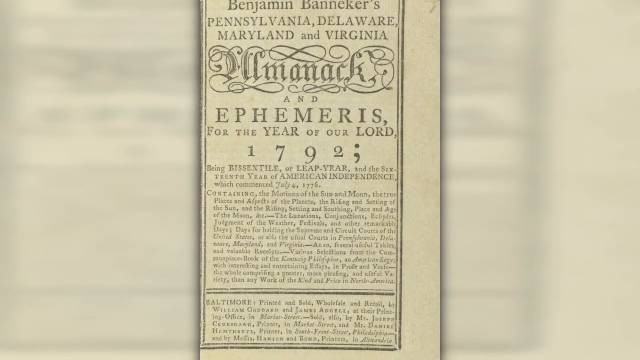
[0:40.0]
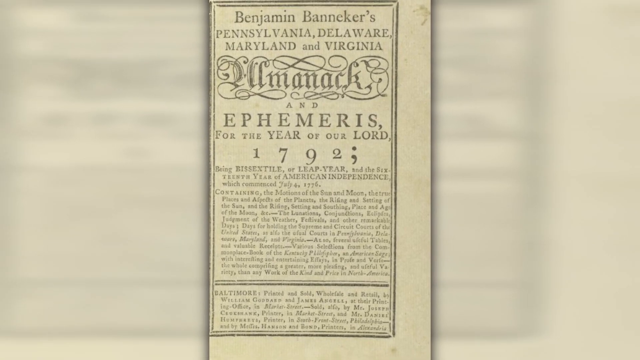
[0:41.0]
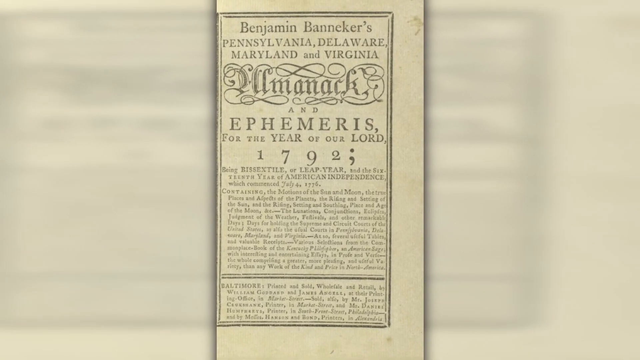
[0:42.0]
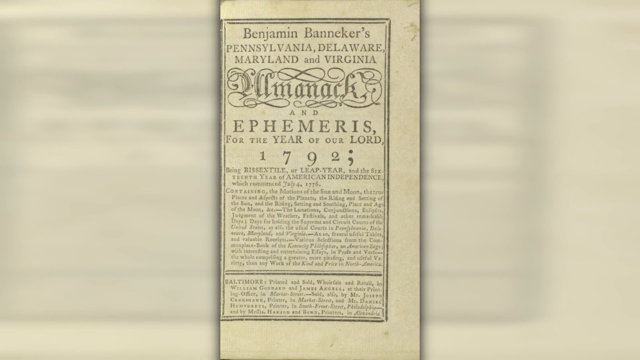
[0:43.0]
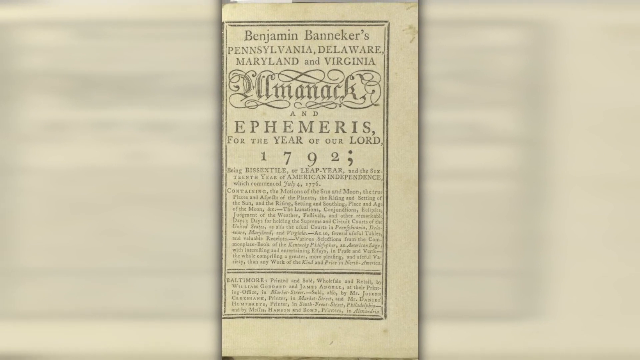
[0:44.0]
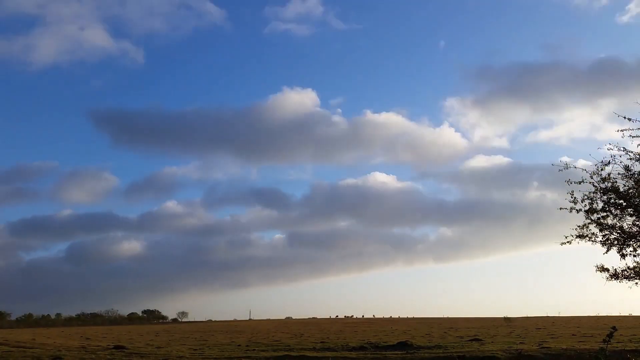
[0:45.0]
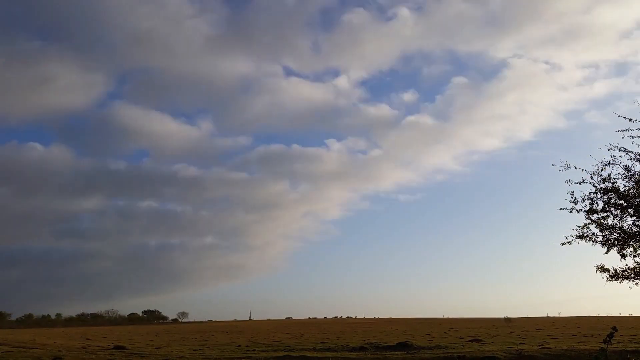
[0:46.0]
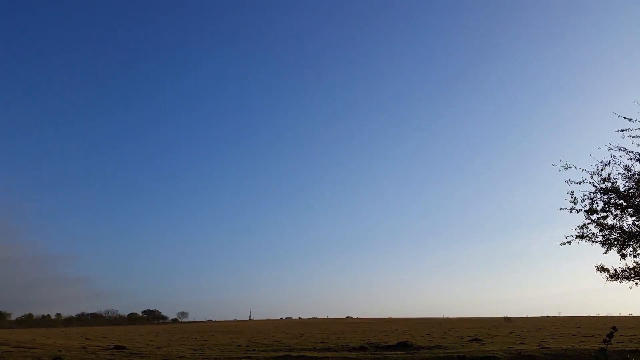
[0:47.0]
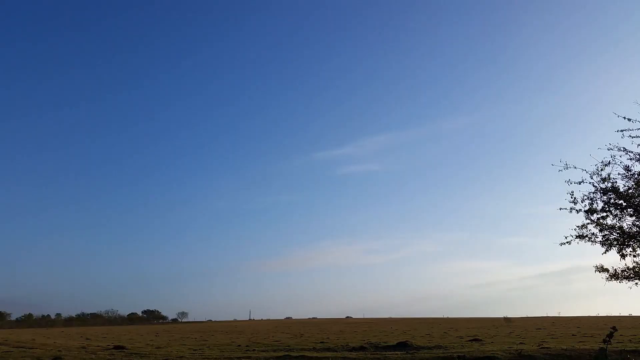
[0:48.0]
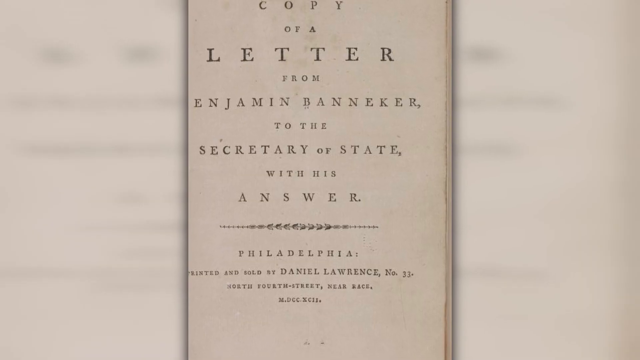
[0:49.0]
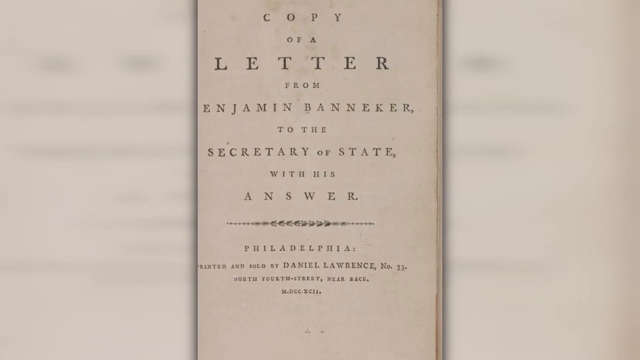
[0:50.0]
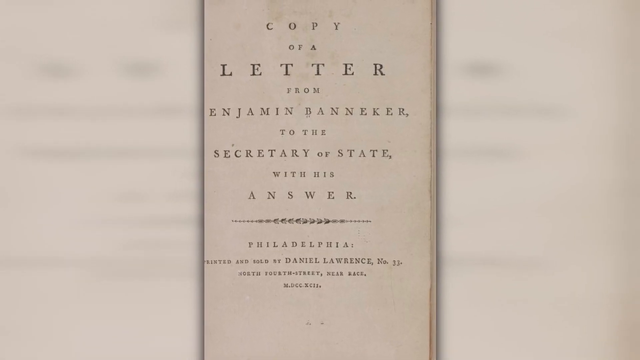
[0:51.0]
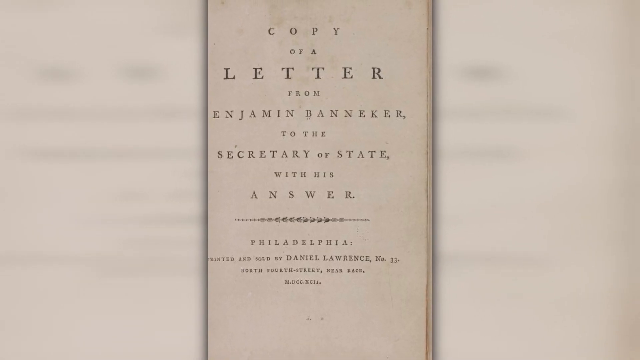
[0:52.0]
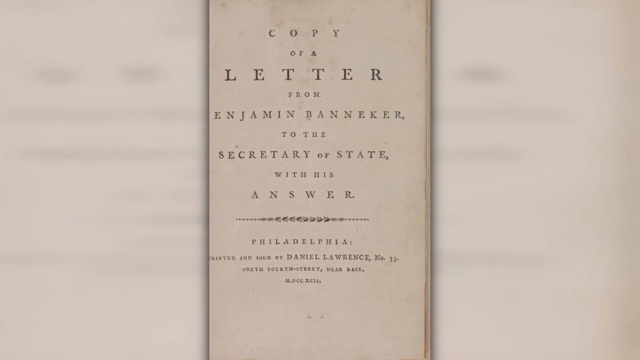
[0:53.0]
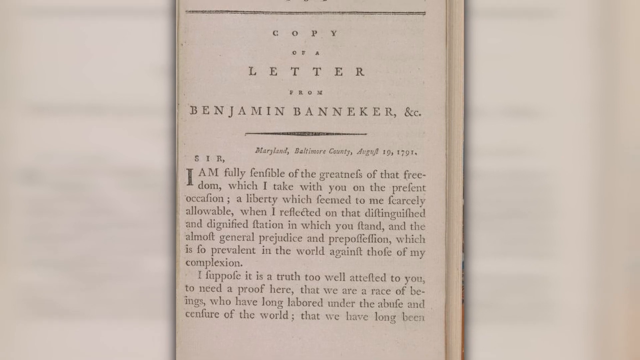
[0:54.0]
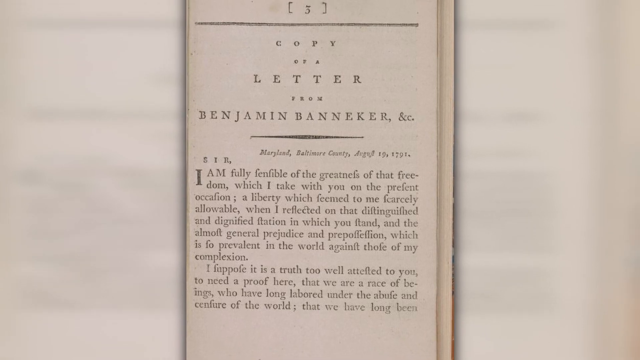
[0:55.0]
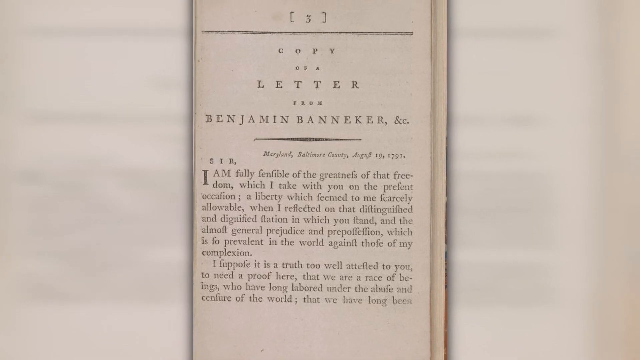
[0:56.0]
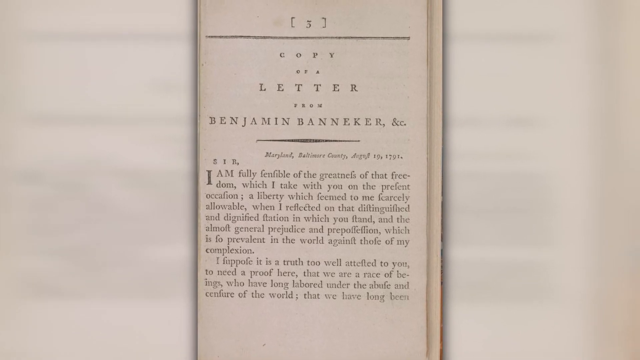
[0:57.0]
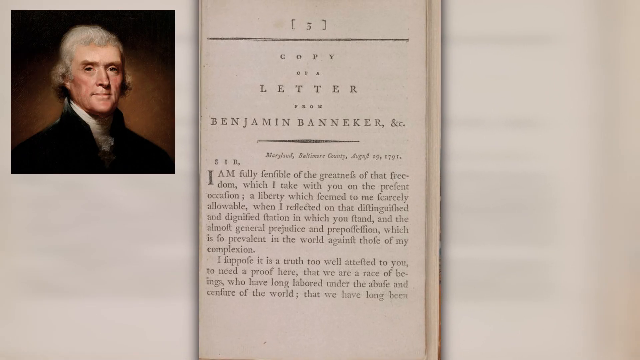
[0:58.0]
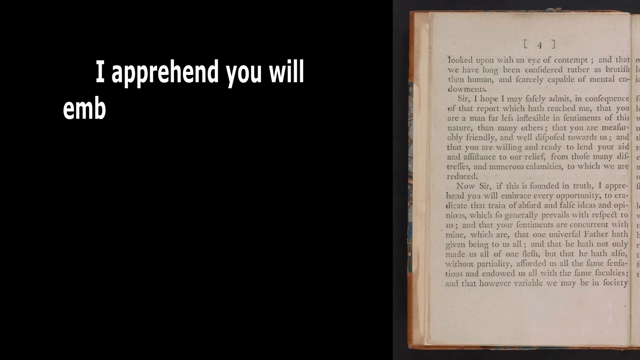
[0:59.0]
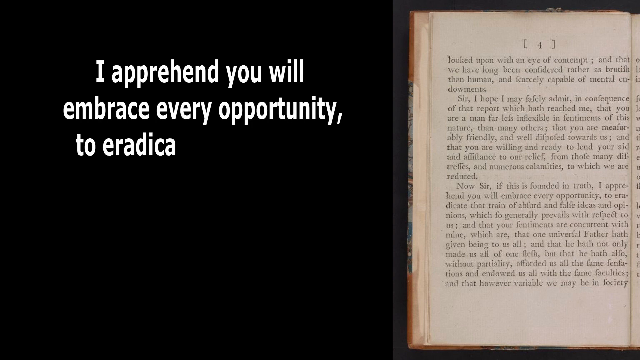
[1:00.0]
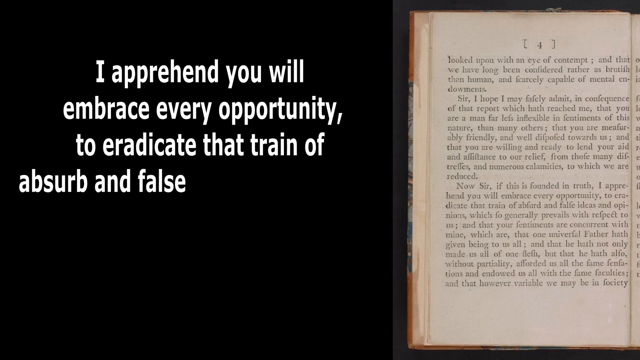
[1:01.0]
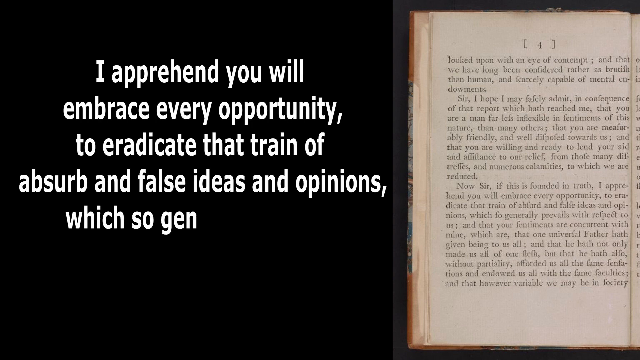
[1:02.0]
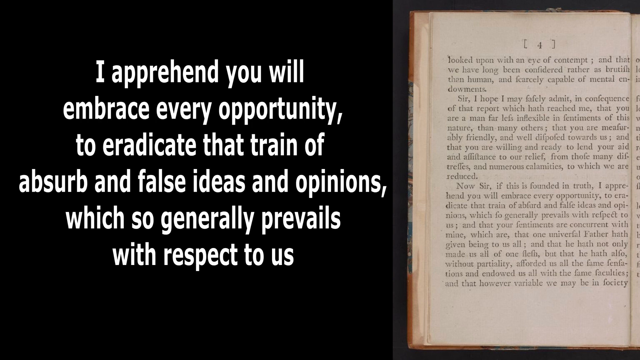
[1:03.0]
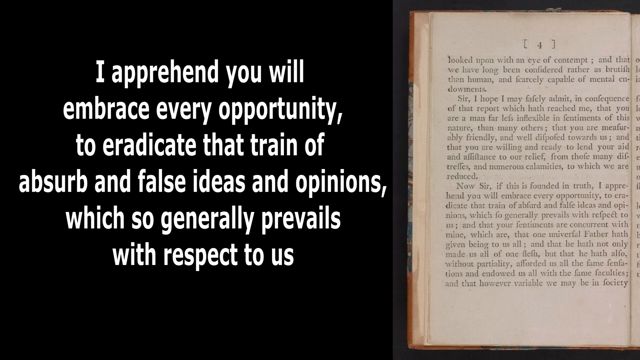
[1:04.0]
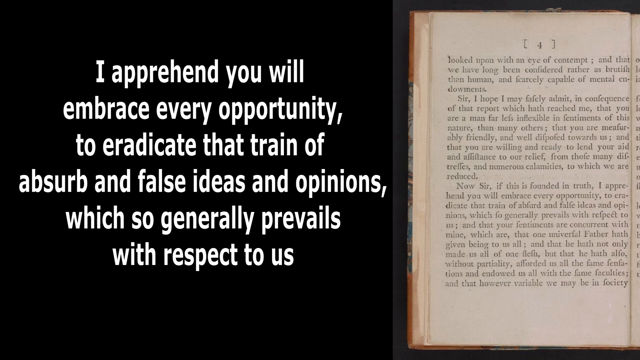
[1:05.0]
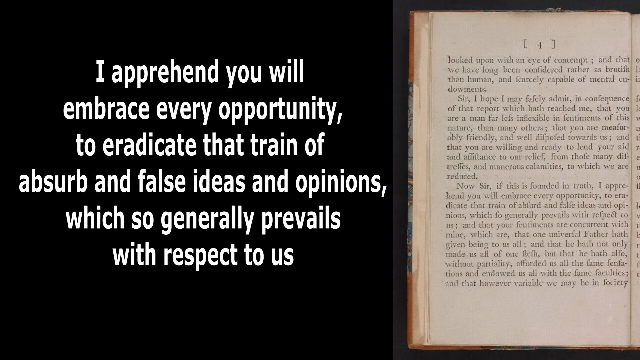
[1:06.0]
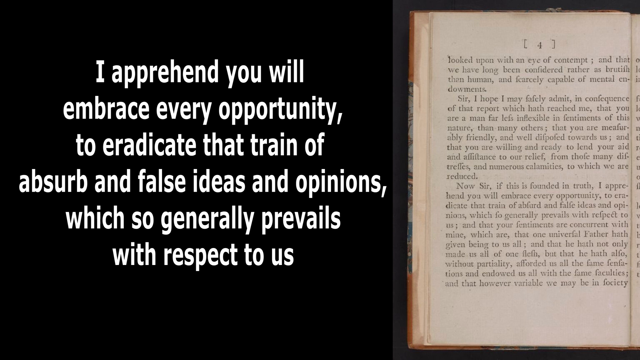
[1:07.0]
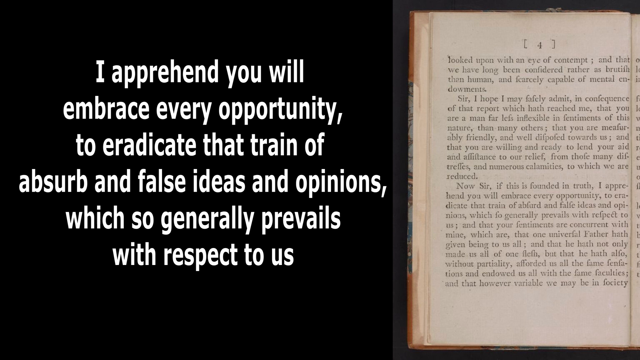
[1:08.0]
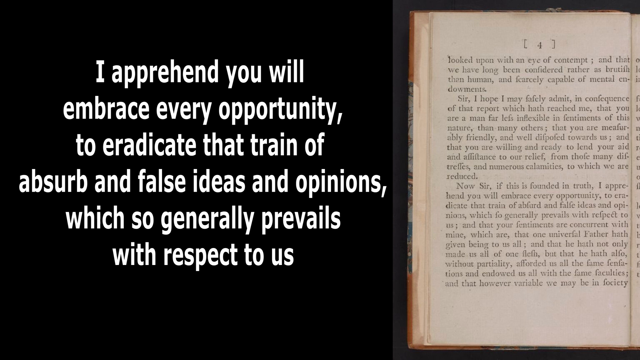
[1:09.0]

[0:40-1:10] A newspaper cutting about Benjamin Banneker refers to his almanac and Ephemeris for the year of our Lord 1792; its detail cannot be read given the quality. The camera then shows an outdoor shot of a low hill rise and a large sky with very fast-moving clouds heading toward the right-hand corner of the screen. There is a tree with leaves on the right-hand side of the screen, and at the top of the low rise to the left are a number of trees. The clouds clear, and the screen changes to a letter from Benjamin Banneker to the Secretary of State with his answer. It then says "Philadelphia printed and sold at Daniel Lawrence number 33 North 4th Street near", followed by a date. The next screen shows some of the content of the letter, saying he is grateful for the freedom and the liberty; the wording is very difficult to read, written in an unfamiliar style. The screen then splits in two, with the letter on the right, while white type starts to appear on the black screen on the left. It says, "I apprehend you will embrace every opportunity to eradicate that train of absurd and false ideas and opinions which so generally prevails with respects to us."